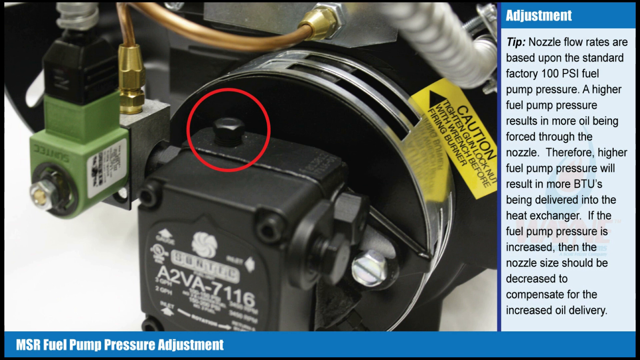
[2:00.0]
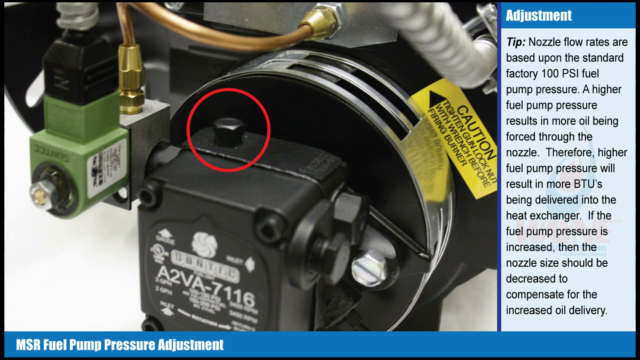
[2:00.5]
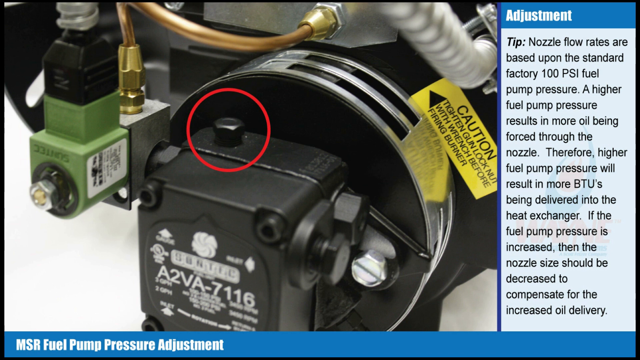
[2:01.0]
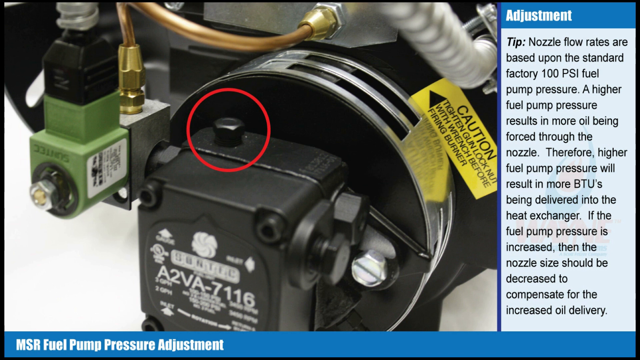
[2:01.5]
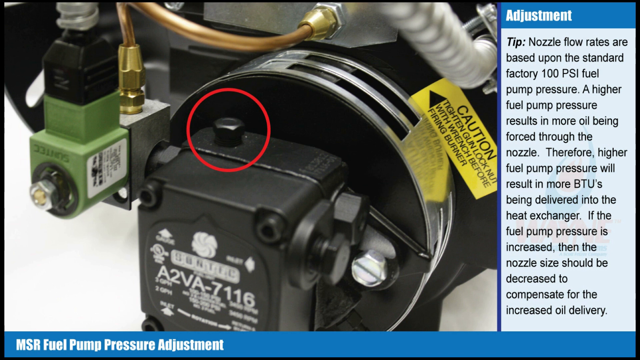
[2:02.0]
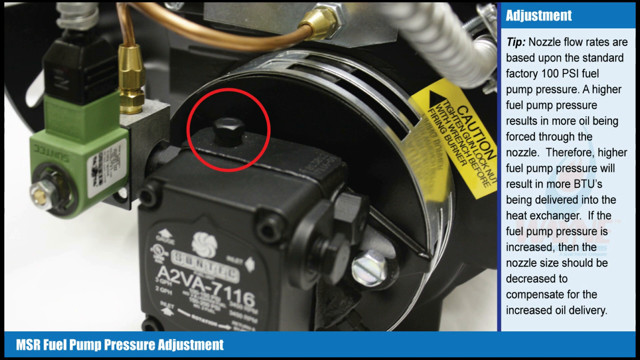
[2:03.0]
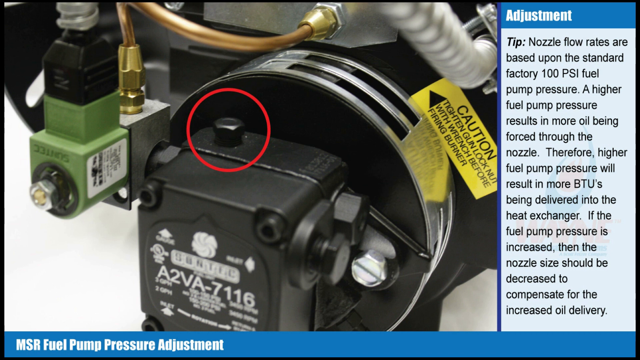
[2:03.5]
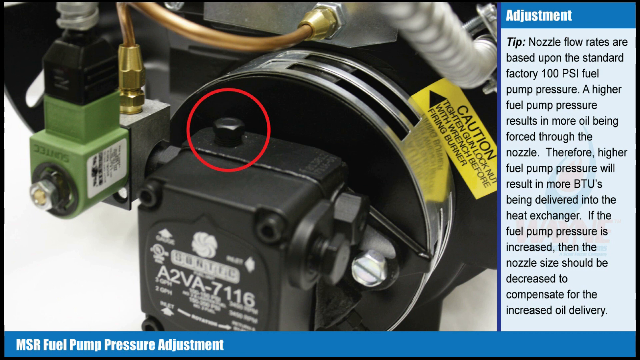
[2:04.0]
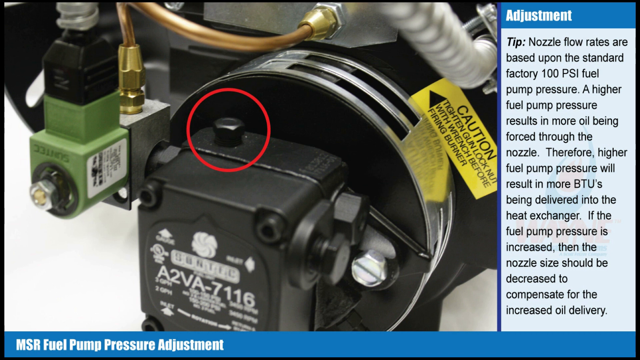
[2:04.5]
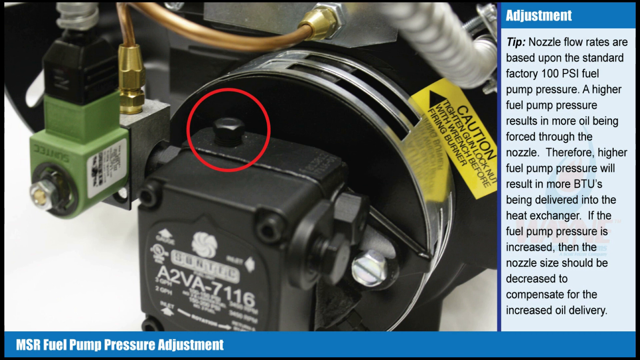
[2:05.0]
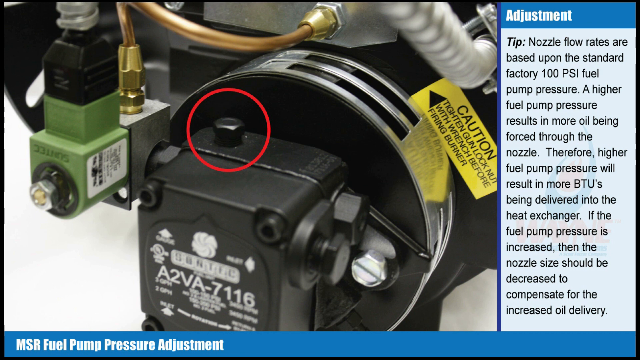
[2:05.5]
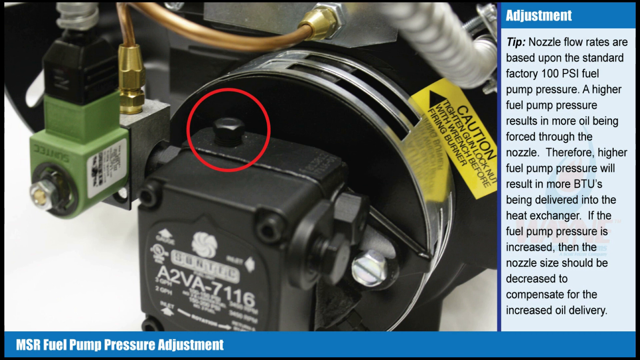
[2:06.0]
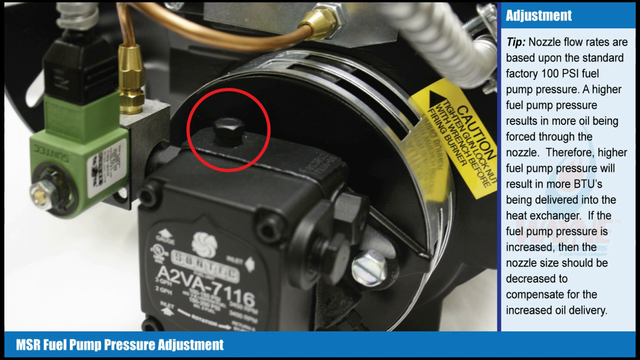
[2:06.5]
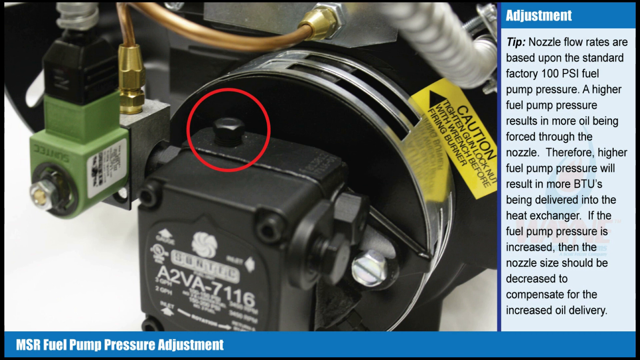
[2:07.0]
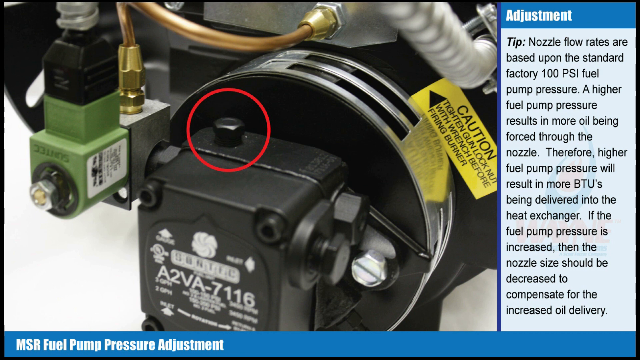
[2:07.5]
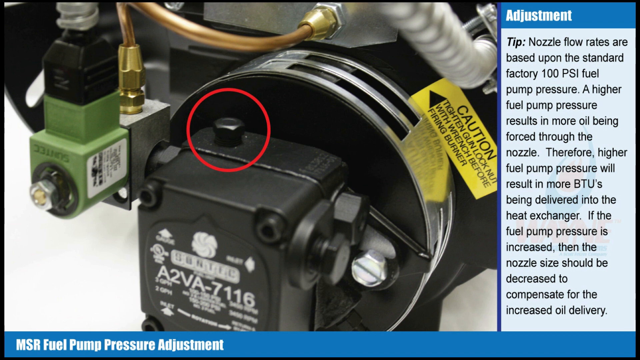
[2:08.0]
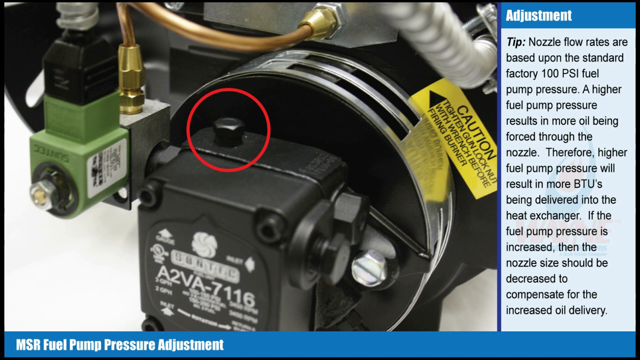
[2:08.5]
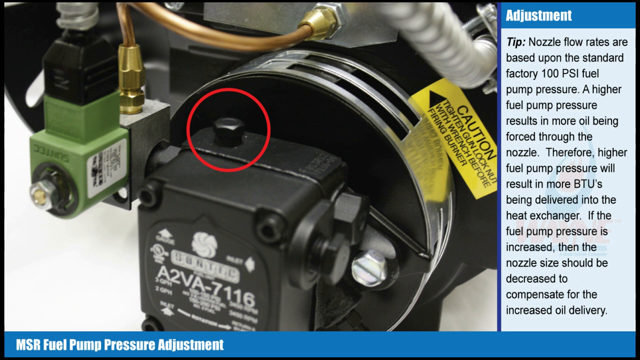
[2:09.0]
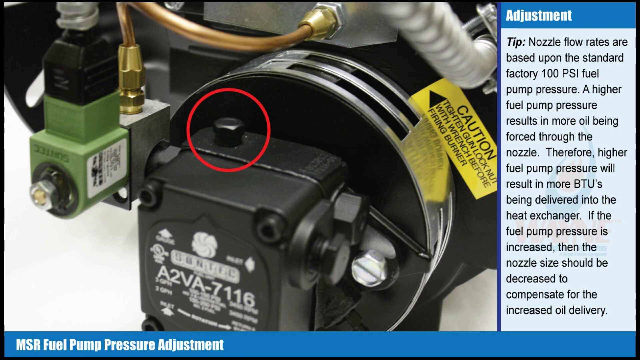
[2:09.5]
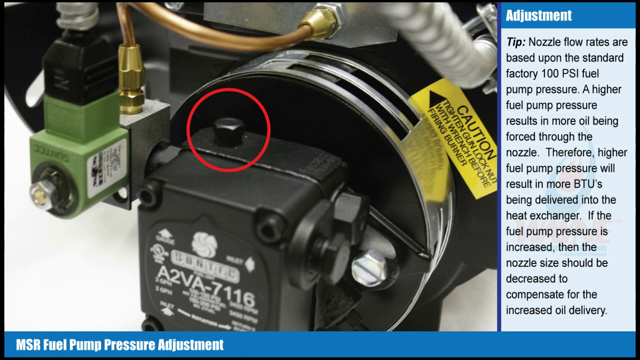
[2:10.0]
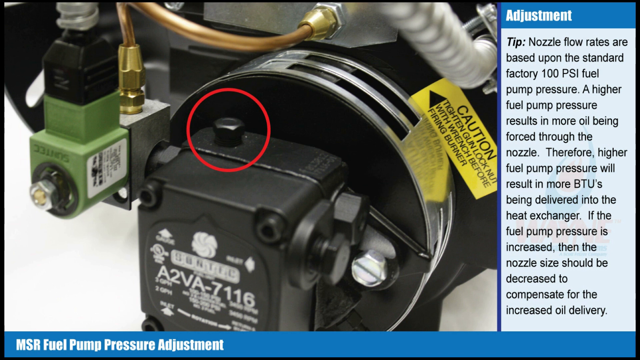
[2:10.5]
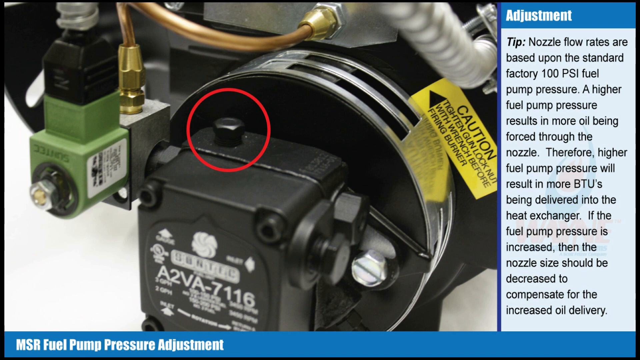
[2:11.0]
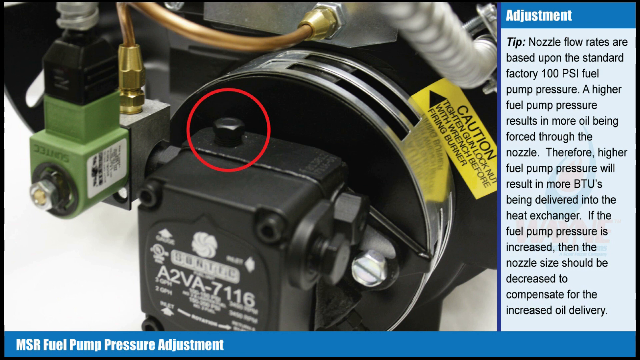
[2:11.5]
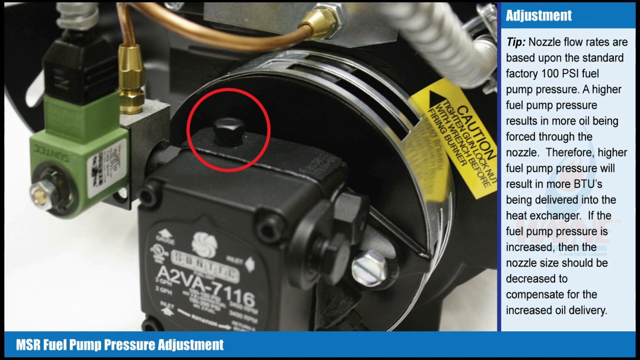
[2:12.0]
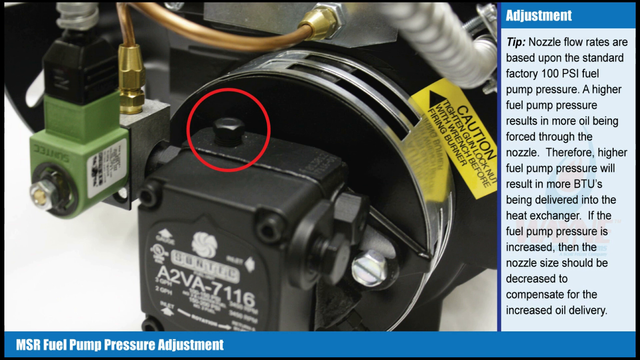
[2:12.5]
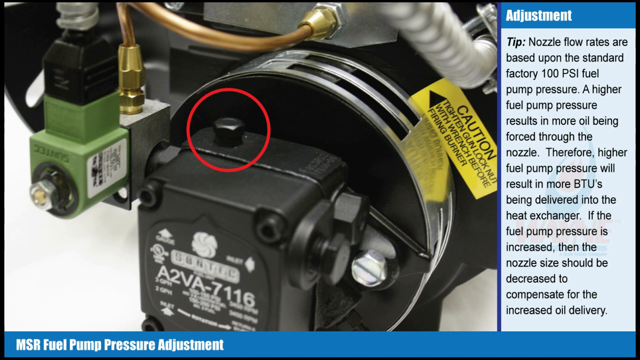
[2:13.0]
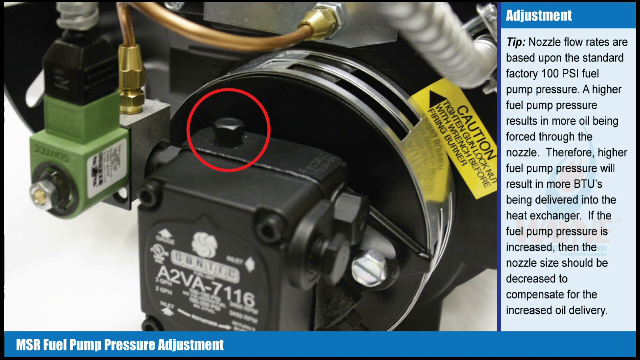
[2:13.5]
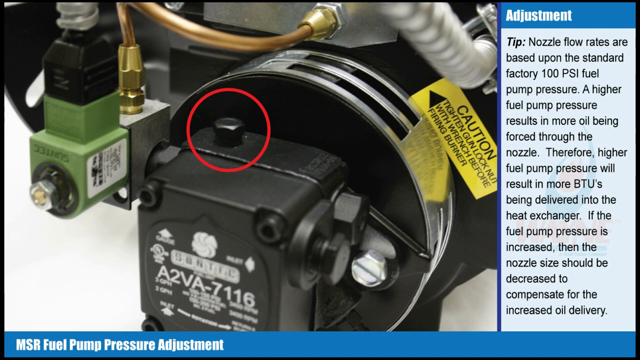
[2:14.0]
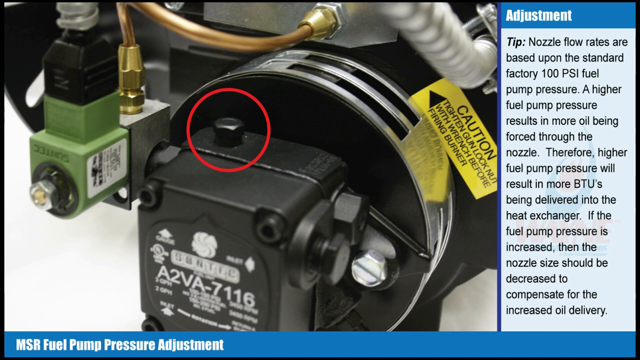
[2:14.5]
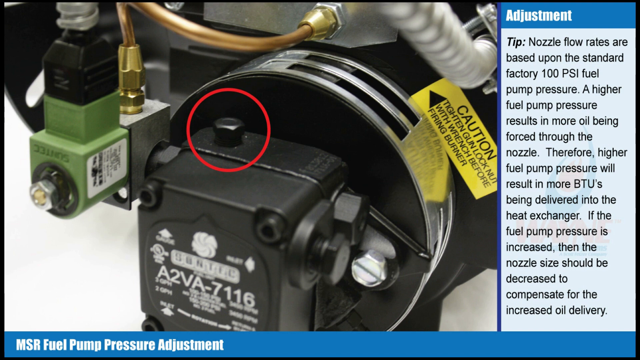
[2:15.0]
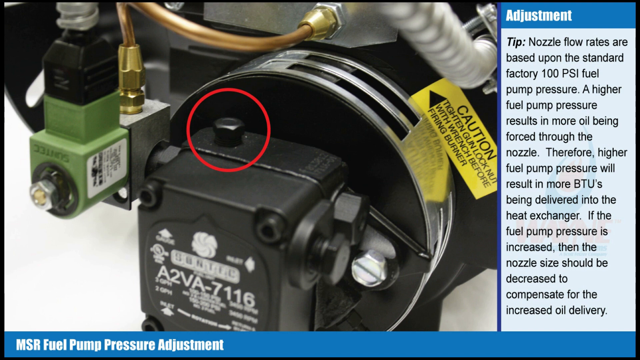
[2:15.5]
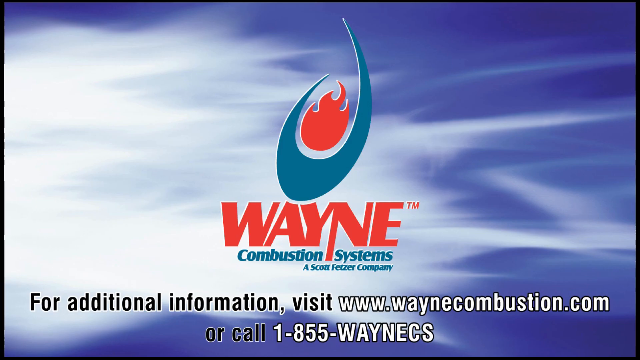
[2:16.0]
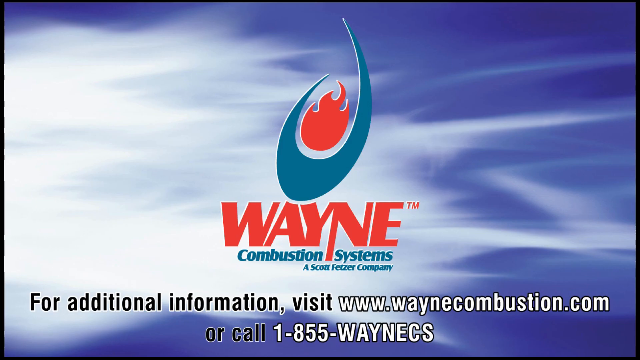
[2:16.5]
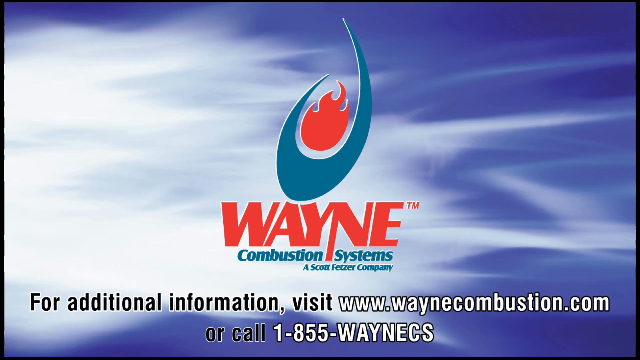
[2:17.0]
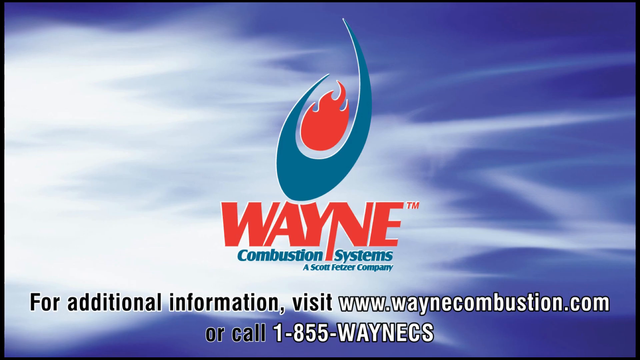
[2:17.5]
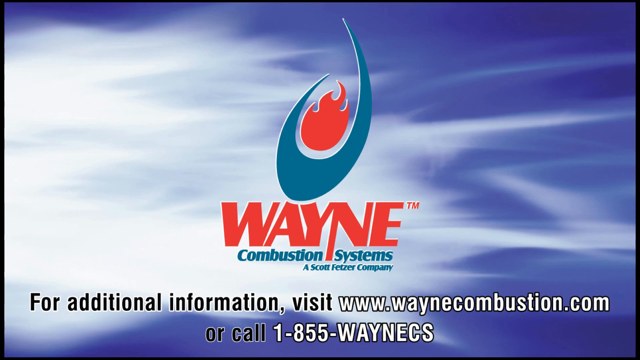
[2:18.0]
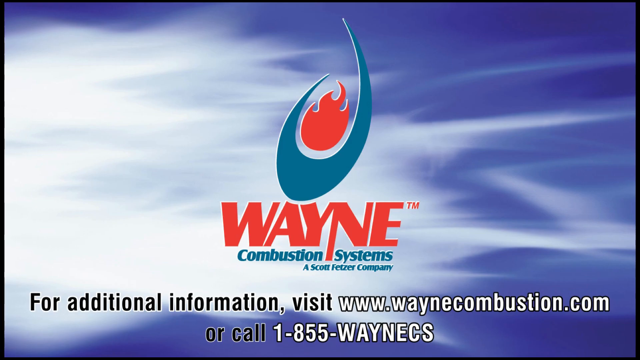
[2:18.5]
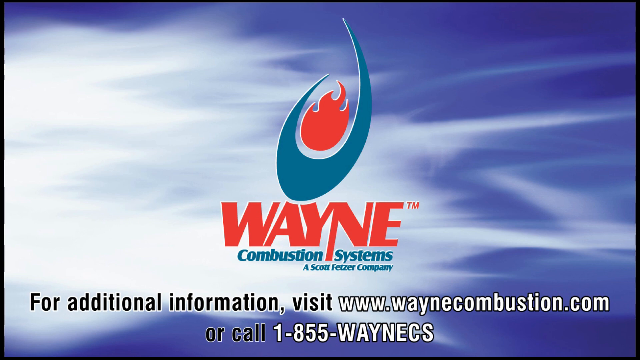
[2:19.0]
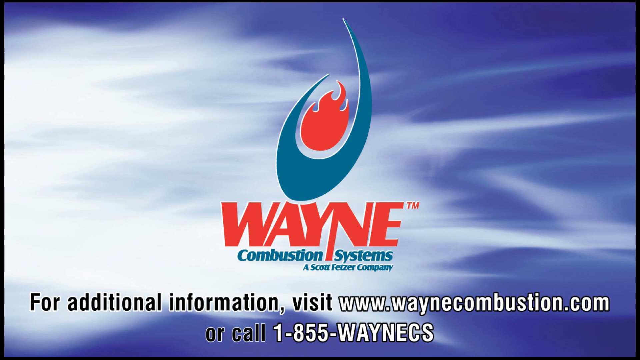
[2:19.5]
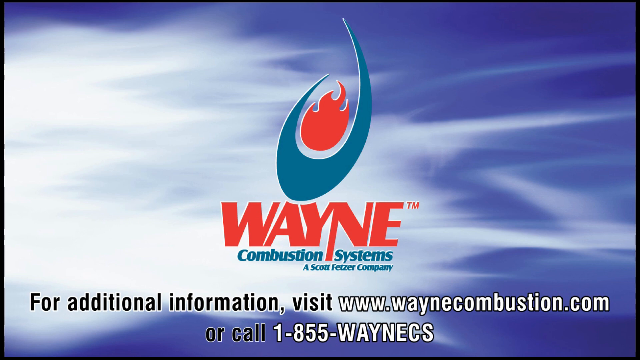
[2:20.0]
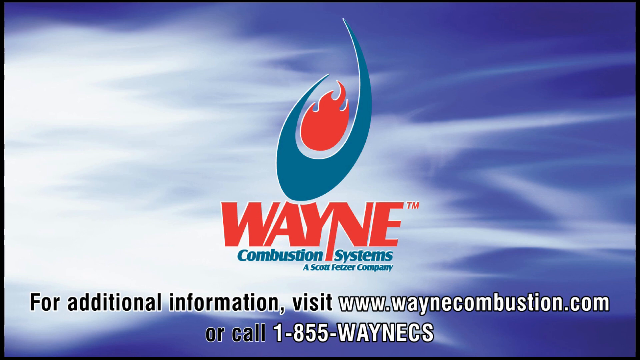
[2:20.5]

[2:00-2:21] The front view continues, with the gauge at the top of the fuel pump still circled in red and a blue banner across the bottom of the screen reading "MSR Fuel Pump Pressure Adjustment" in white font. The same tip is still on screen. The model number of the fuel pump, "A2VA-7116," is in white text on the front. For the final four seconds, the image changes to the Wayne Combustion Systems company logo graphic, with "Wayne" in red and "Combustion Systems" in blue, and a red flame above. The background is a medium blue with a white flame going across the screen from left to right. Black text toward the bottom of the screen reads "for additional information visit," followed by white text reading "www.waynecombustion.com."